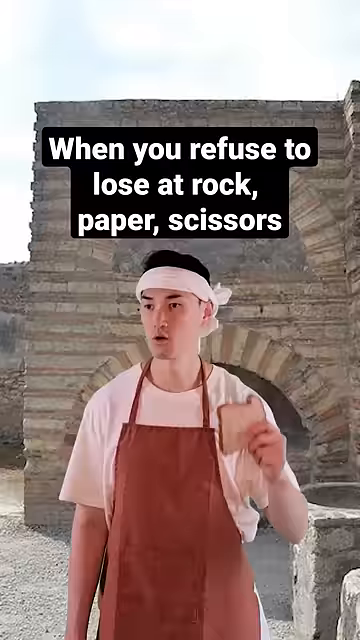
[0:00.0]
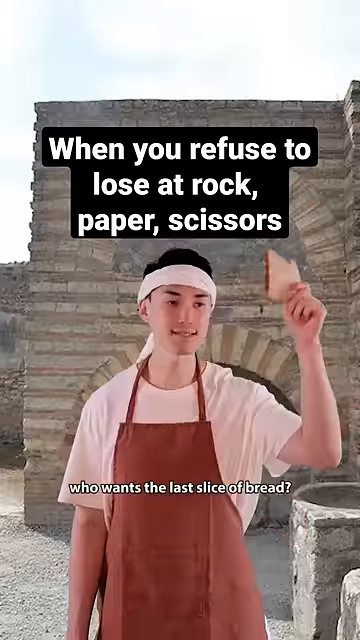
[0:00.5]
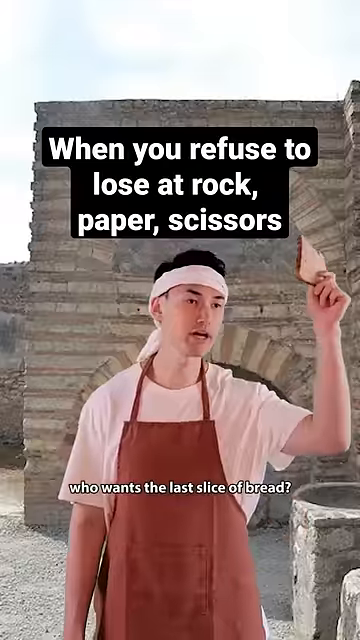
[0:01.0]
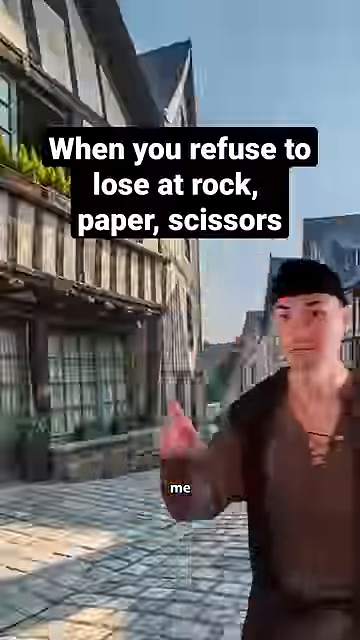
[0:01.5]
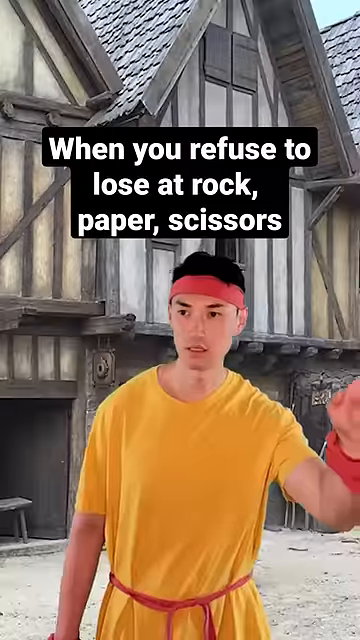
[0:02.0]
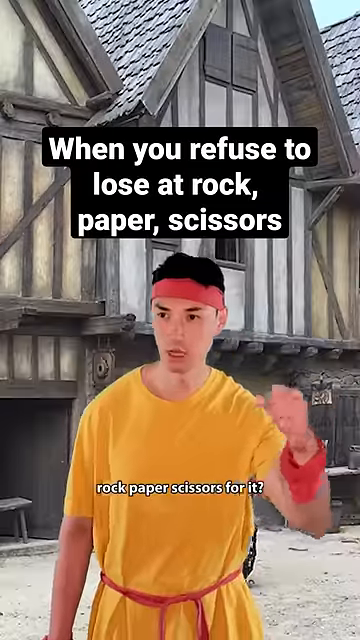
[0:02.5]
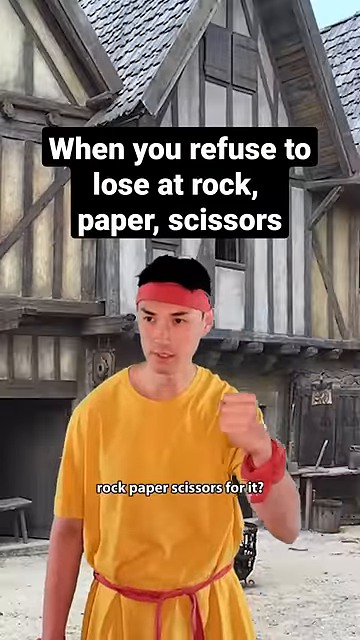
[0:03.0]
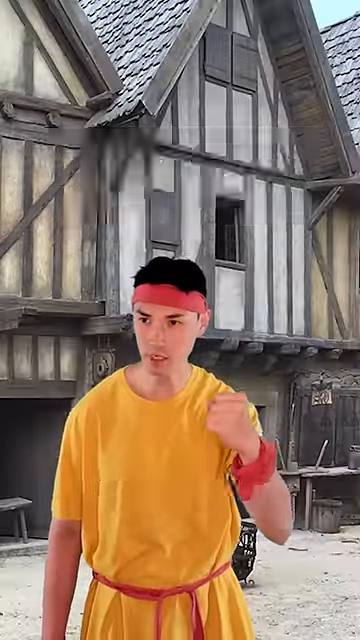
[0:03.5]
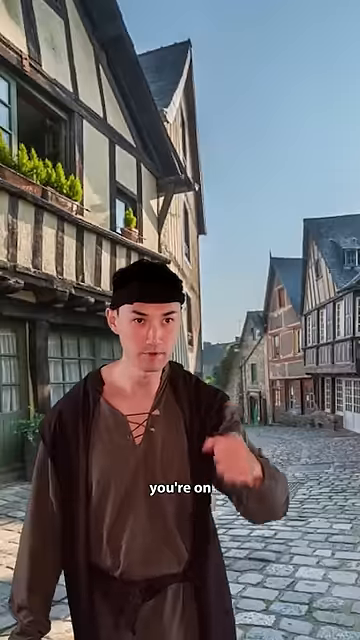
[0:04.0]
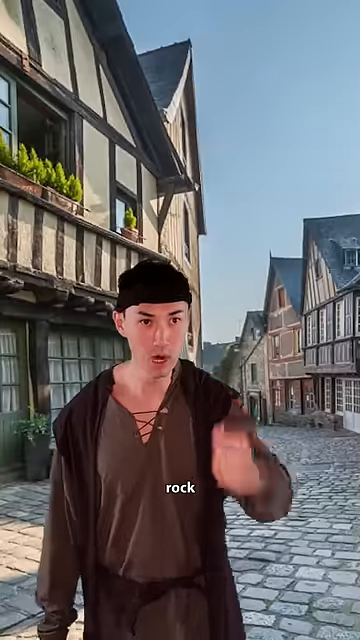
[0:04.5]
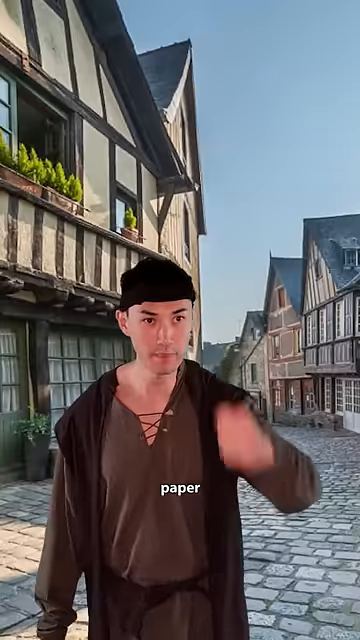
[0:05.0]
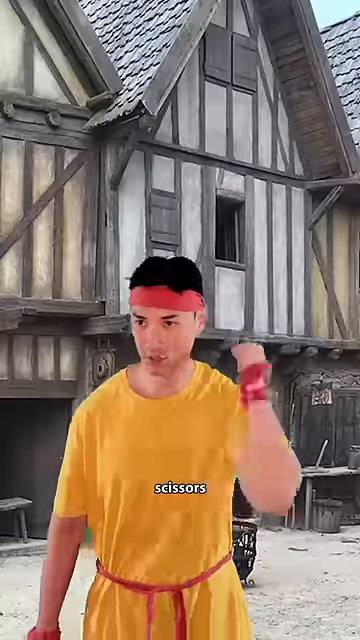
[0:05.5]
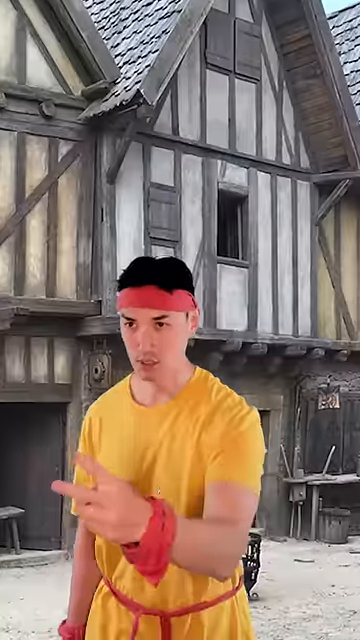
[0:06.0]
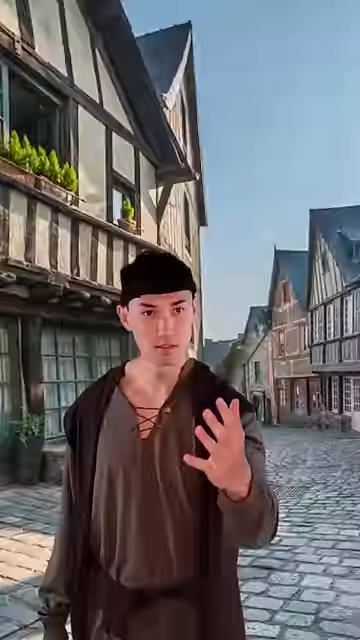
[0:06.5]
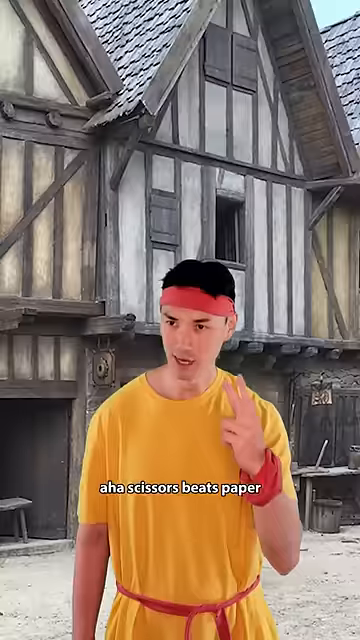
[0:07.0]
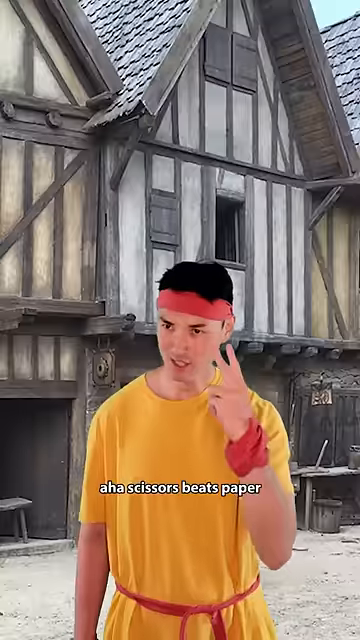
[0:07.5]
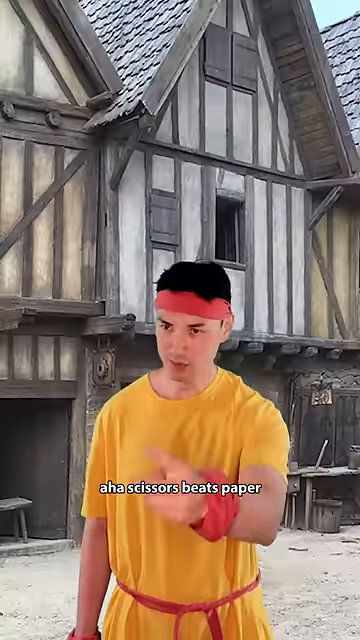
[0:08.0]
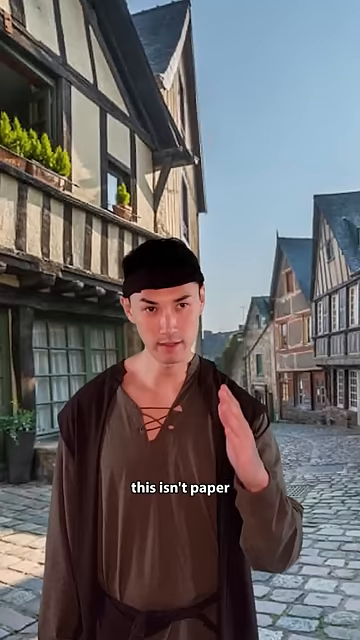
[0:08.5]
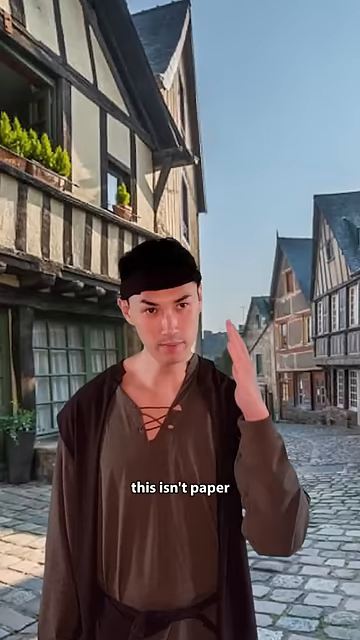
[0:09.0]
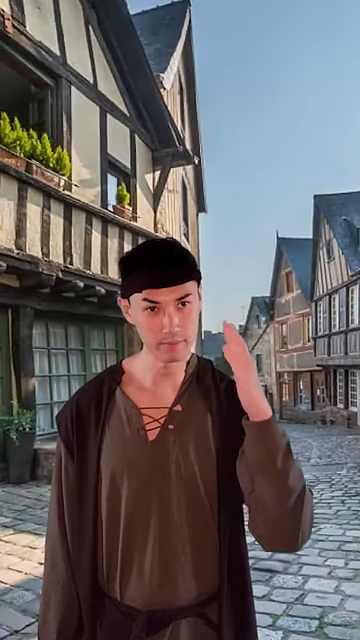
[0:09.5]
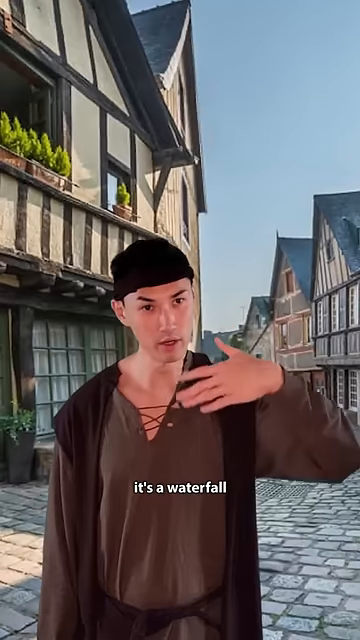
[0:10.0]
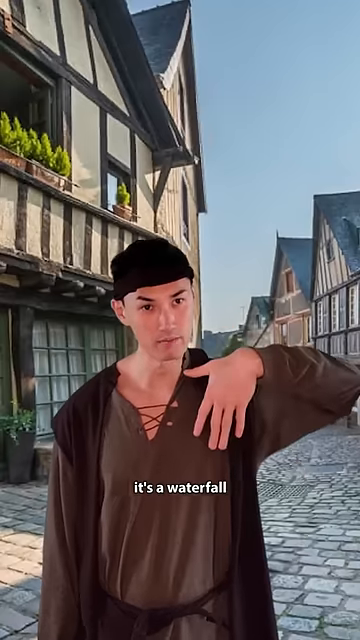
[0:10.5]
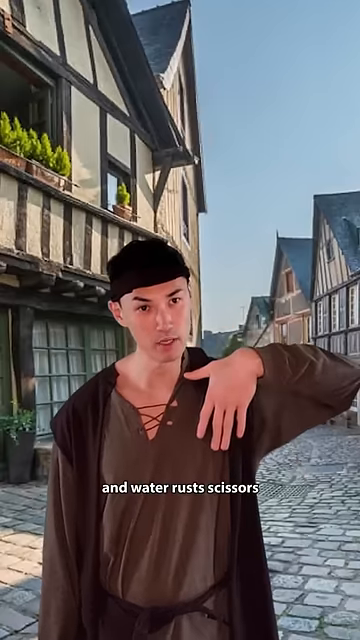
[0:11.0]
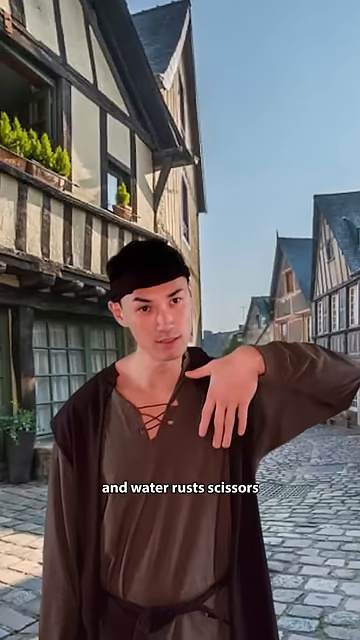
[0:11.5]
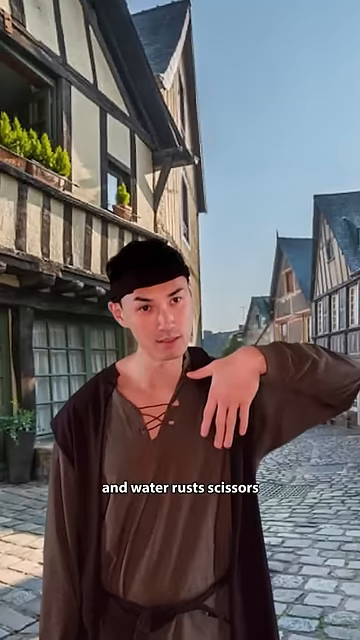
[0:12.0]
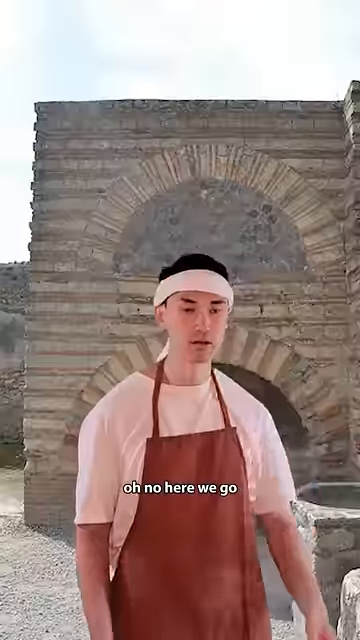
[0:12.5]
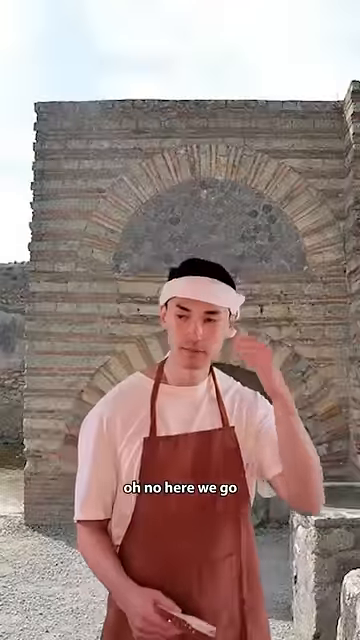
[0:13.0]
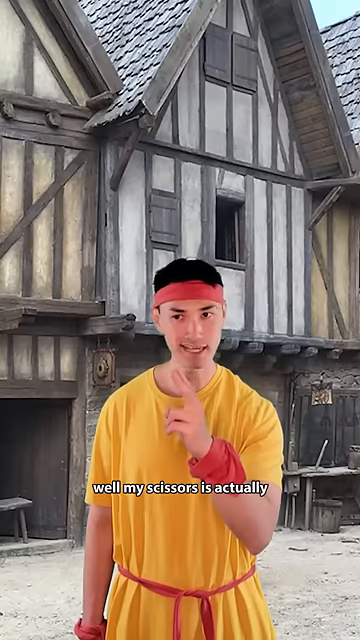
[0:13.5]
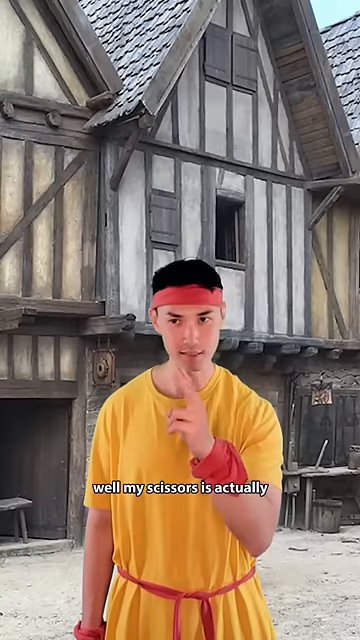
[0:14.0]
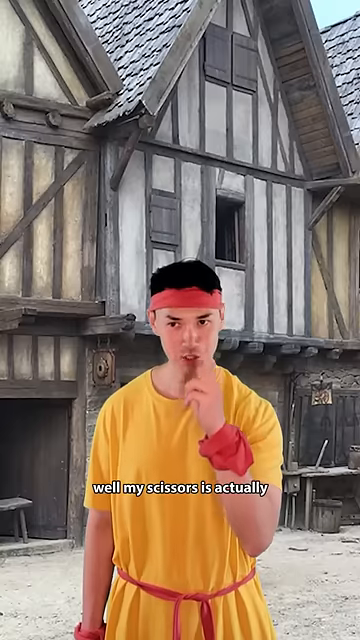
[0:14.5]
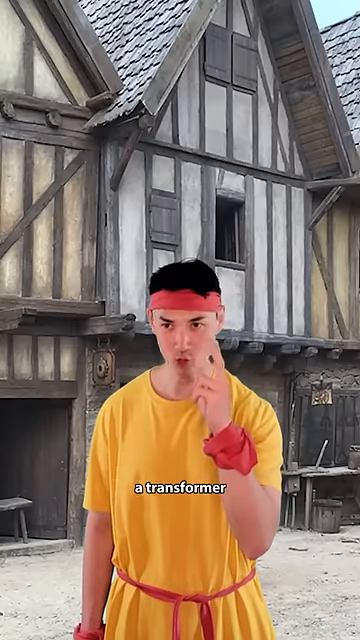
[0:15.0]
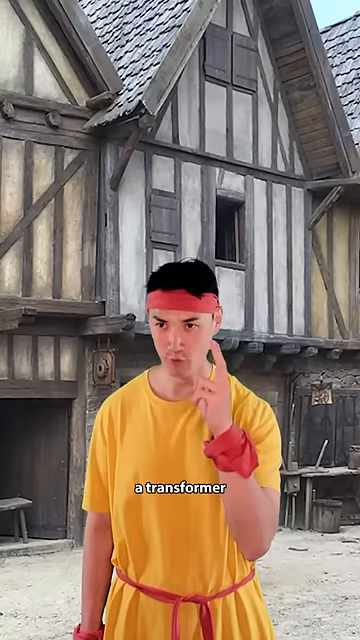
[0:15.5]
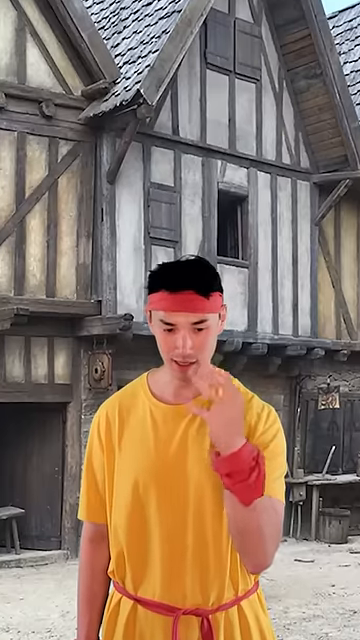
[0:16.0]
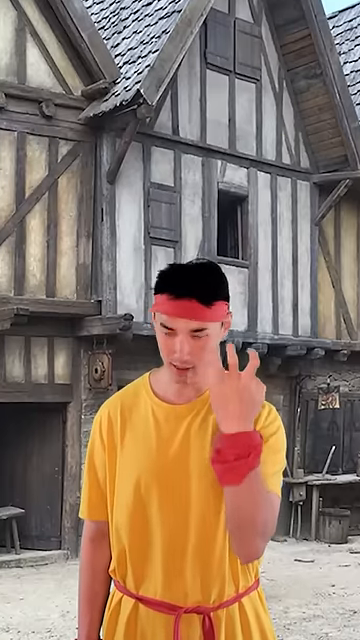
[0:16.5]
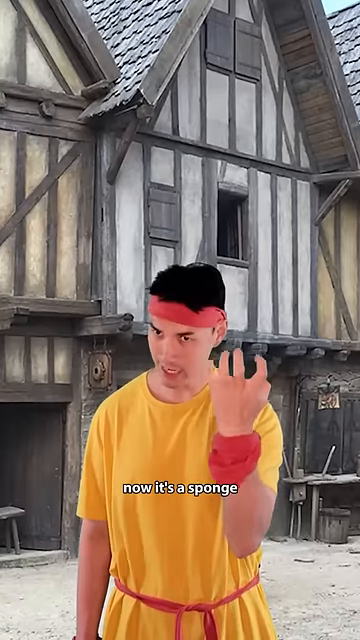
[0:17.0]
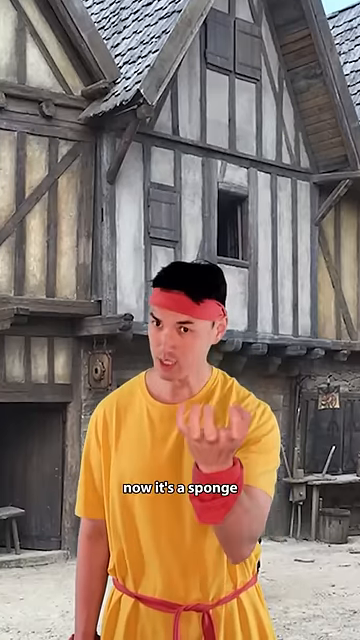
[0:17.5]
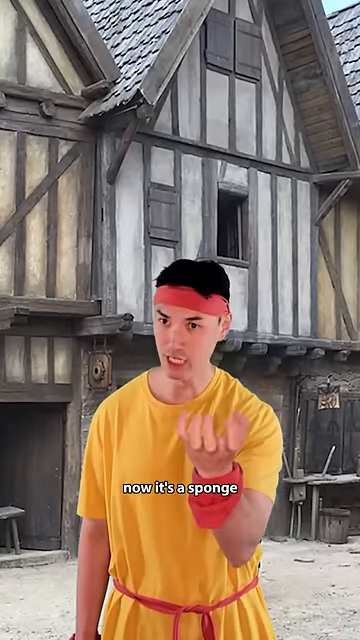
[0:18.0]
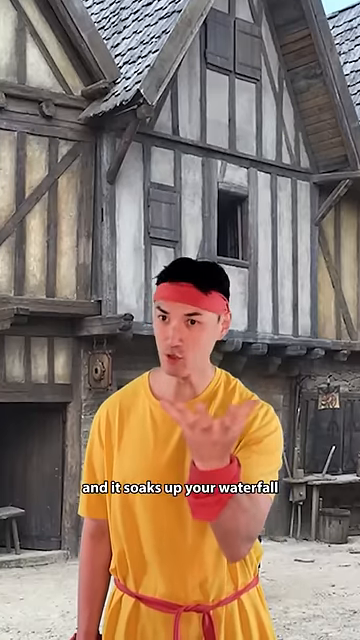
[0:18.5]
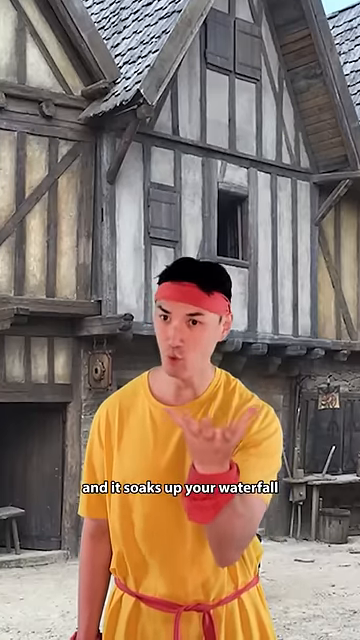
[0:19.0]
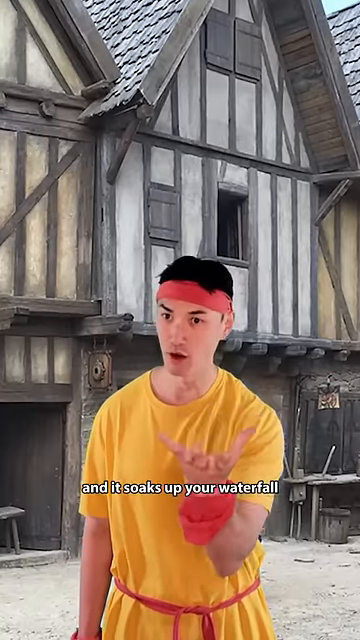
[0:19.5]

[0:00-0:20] A man performs a skit by himself, switching between several different outfits: a man in a yellow shirt, a baker's outfit and a peasant's outfit. The background looks to be a medieval setting. Captions appear throughout, starting with the main caption, "When you refuse to lose at Rock, Paper, Scissors." The three characters are shown around a game of rock, paper, scissors. First, one character asks, "Who wants the last slice of bread?" Two of them, the guy in the yellow shirt and the peasant, answer "Me, me," and play for the slice of bread. The caption reads, "You're on, Rock, Paper, Shoot." The yellow-shirted guy says, "Ah, scissors beats paper." The other replies, "This isn't paper, this is a waterfall, and water rusts scissors." The answer comes back: "Well, my scissors is actually a transformer. Now it's a sponge, and it soaks up your waterfall." The peasant and the guy in the yellow shirt both refuse to lose.